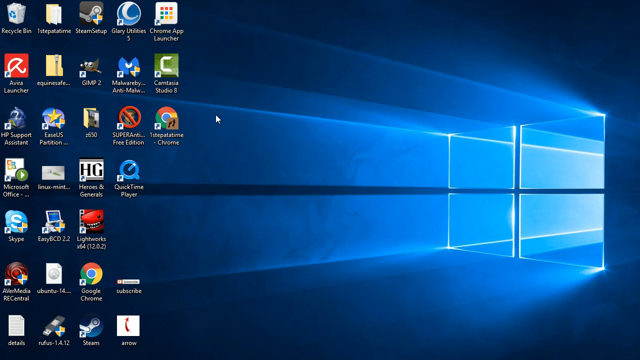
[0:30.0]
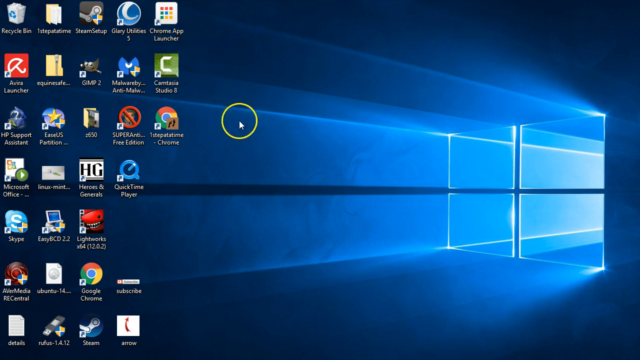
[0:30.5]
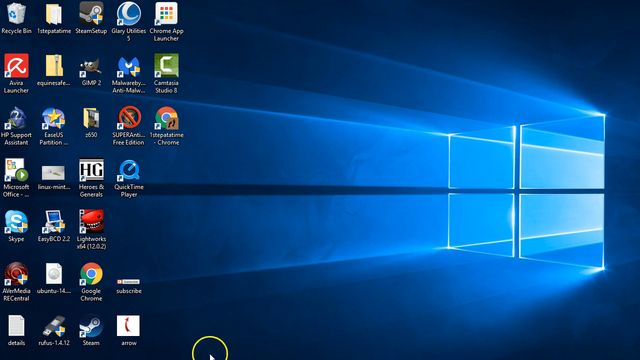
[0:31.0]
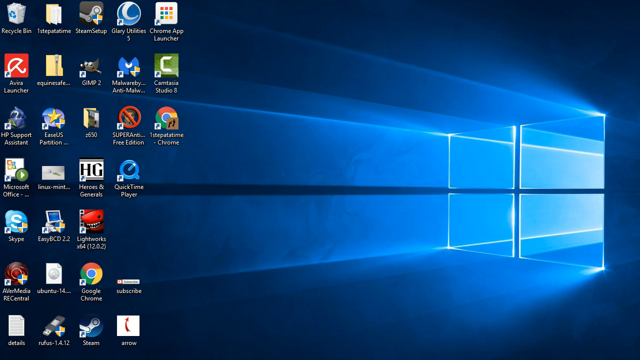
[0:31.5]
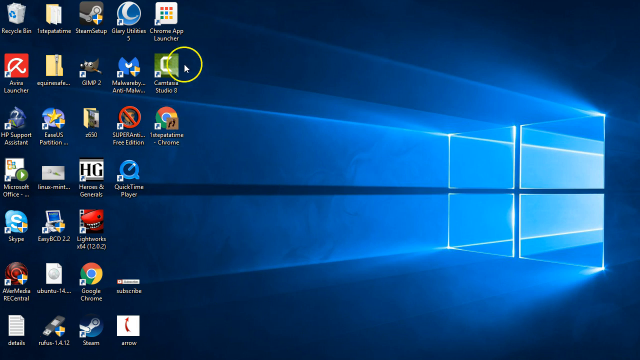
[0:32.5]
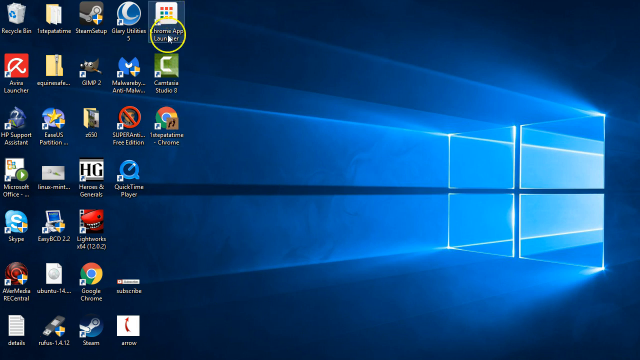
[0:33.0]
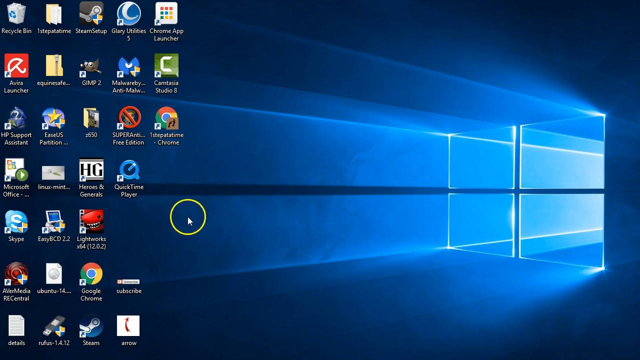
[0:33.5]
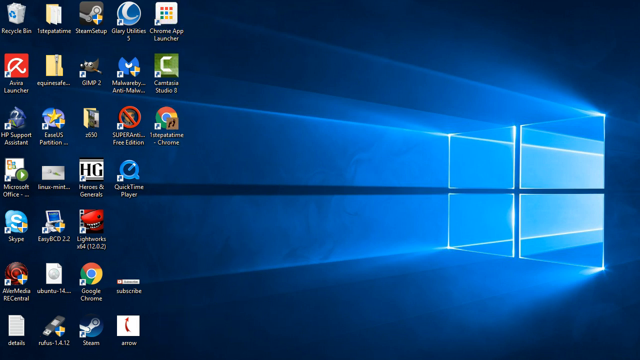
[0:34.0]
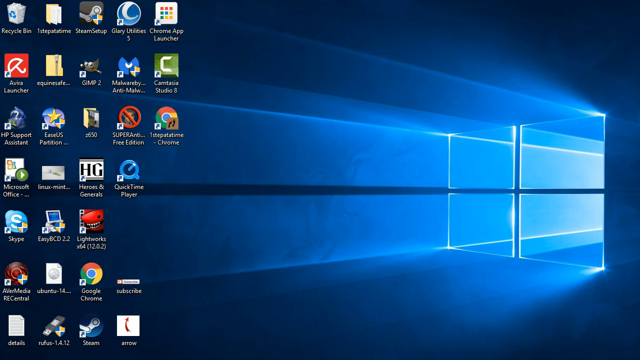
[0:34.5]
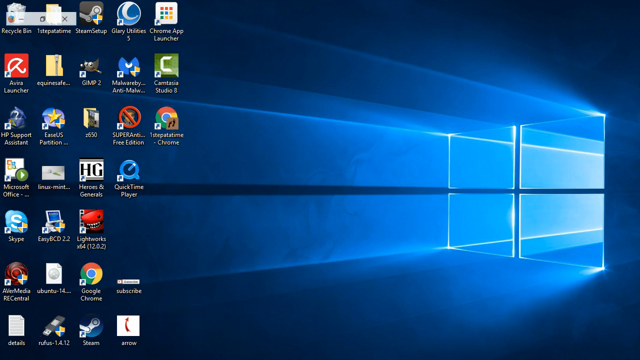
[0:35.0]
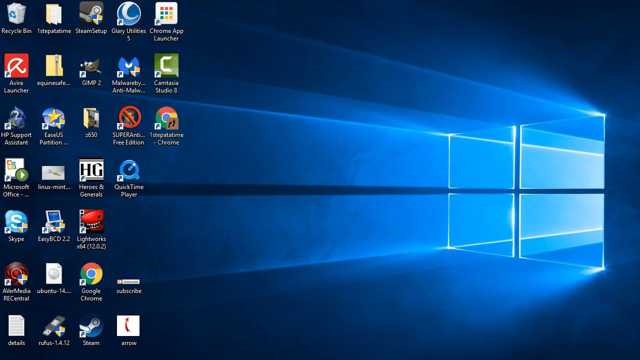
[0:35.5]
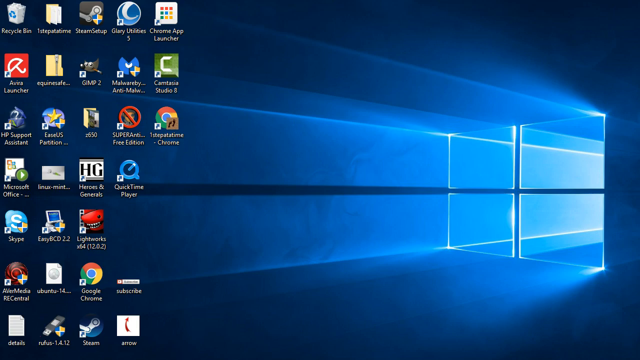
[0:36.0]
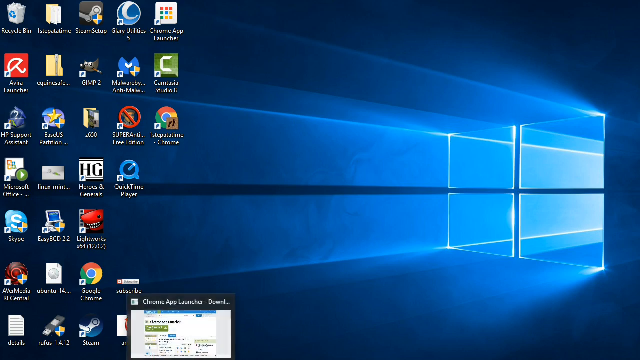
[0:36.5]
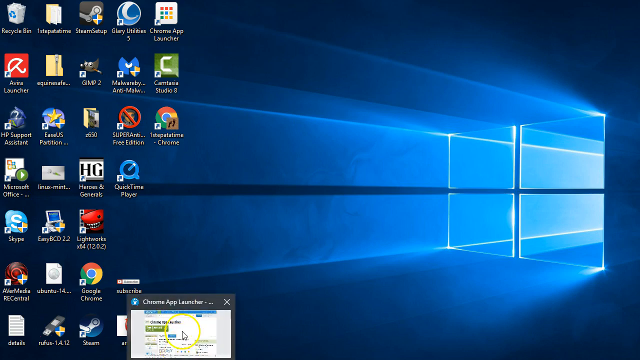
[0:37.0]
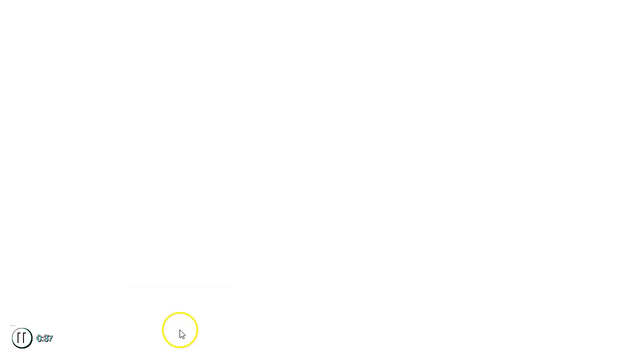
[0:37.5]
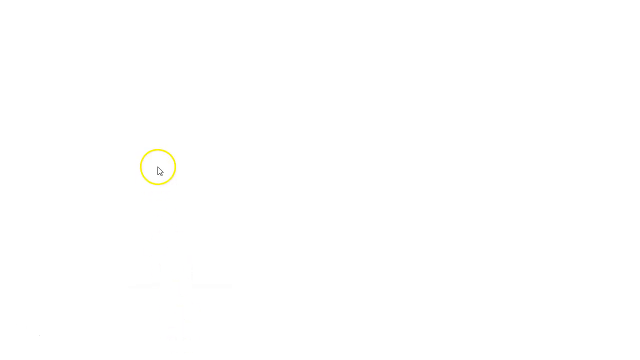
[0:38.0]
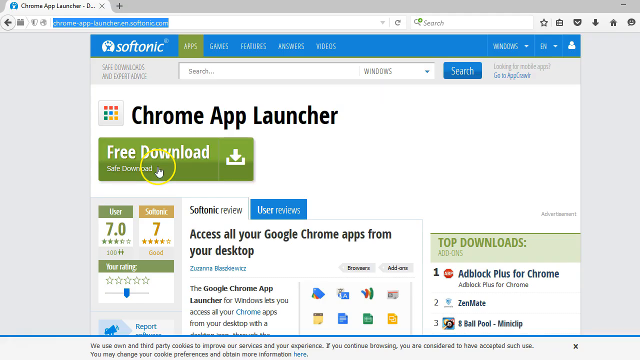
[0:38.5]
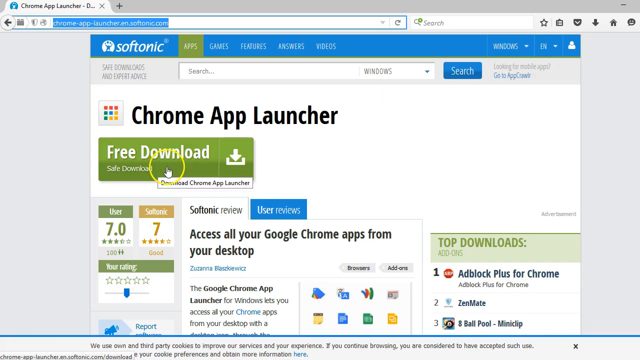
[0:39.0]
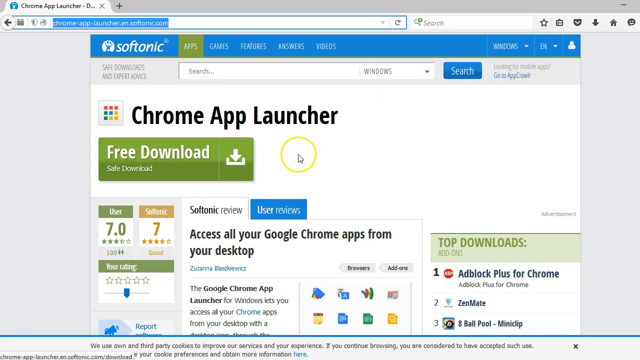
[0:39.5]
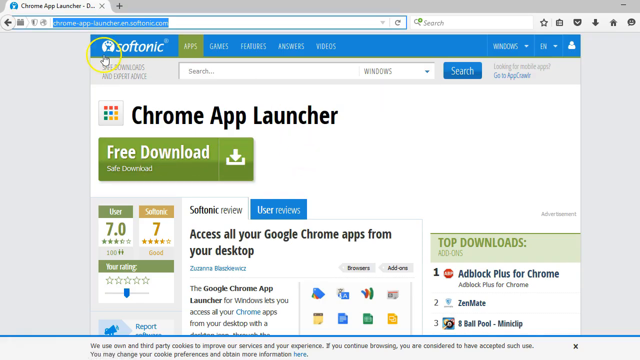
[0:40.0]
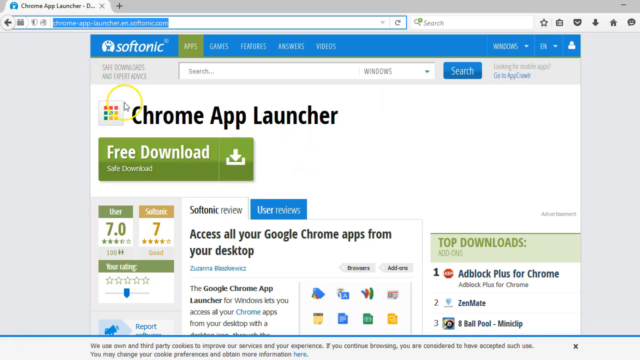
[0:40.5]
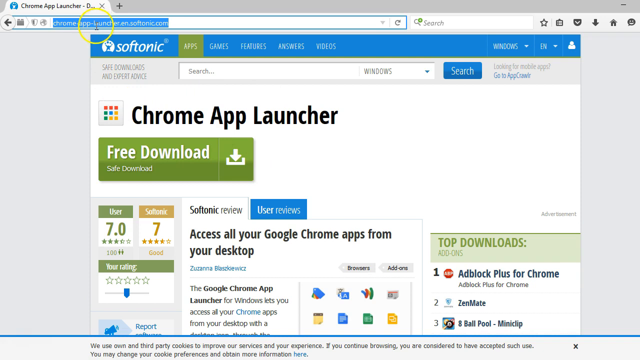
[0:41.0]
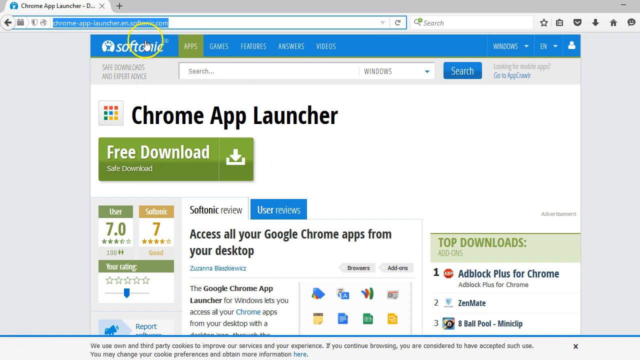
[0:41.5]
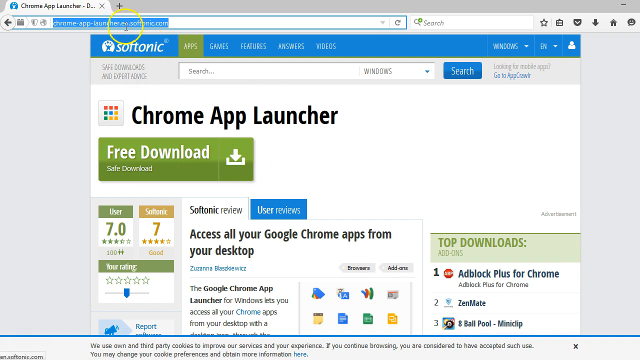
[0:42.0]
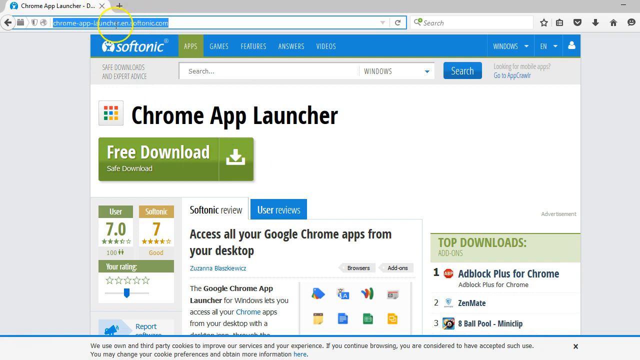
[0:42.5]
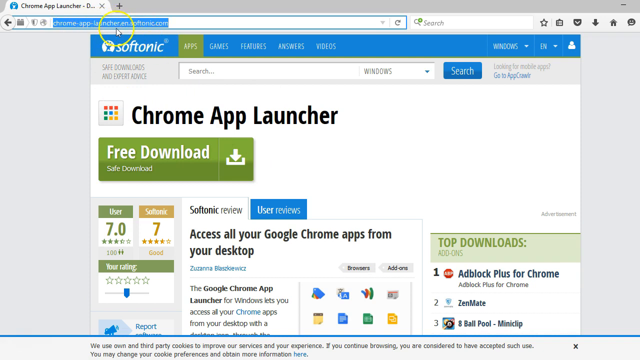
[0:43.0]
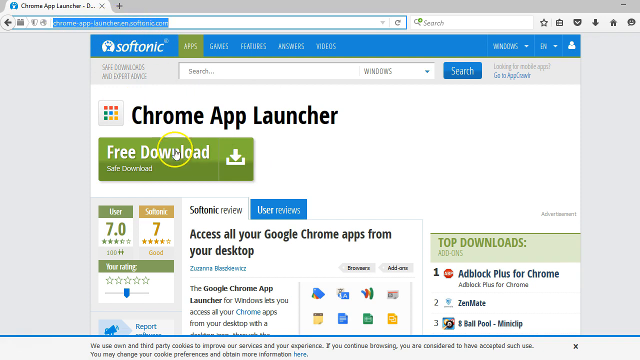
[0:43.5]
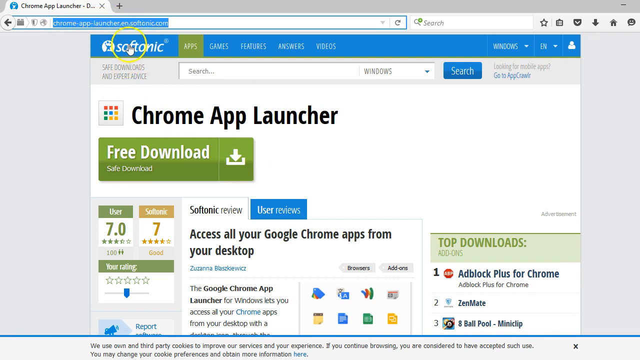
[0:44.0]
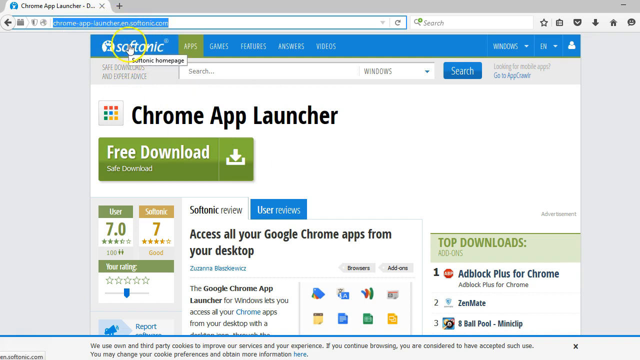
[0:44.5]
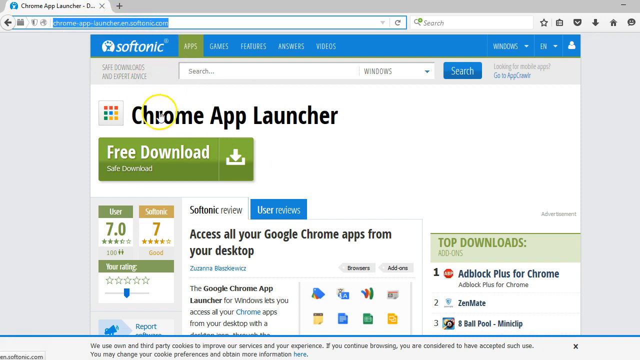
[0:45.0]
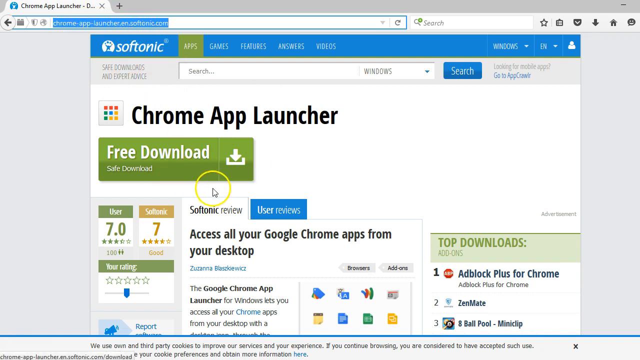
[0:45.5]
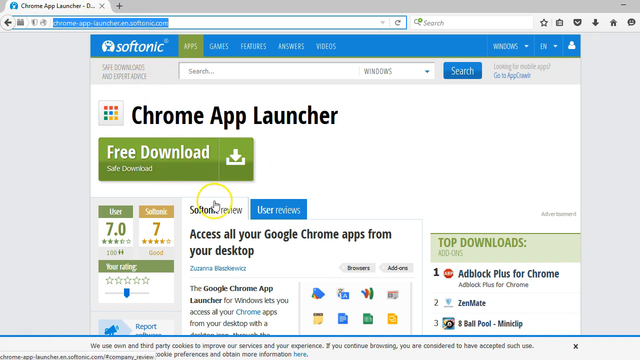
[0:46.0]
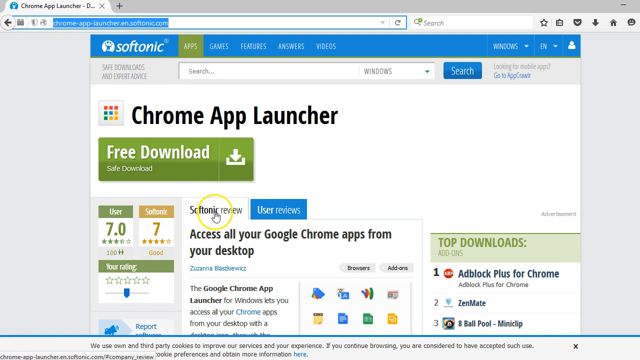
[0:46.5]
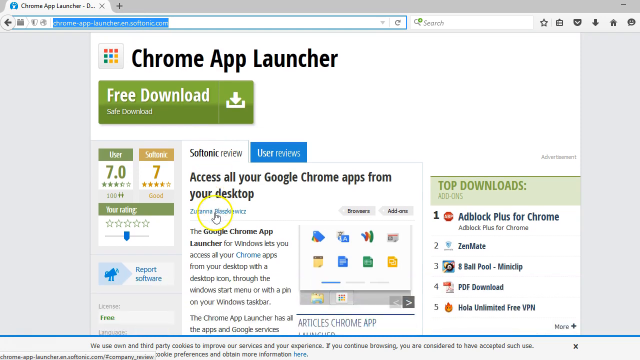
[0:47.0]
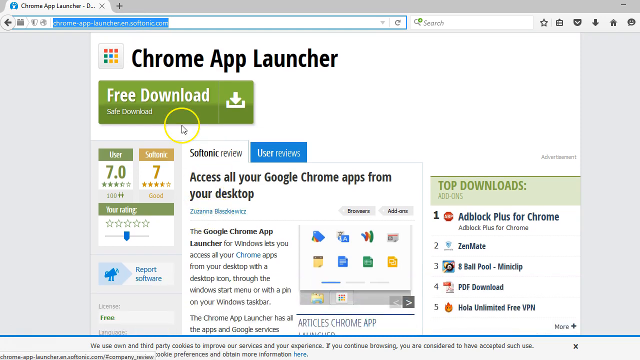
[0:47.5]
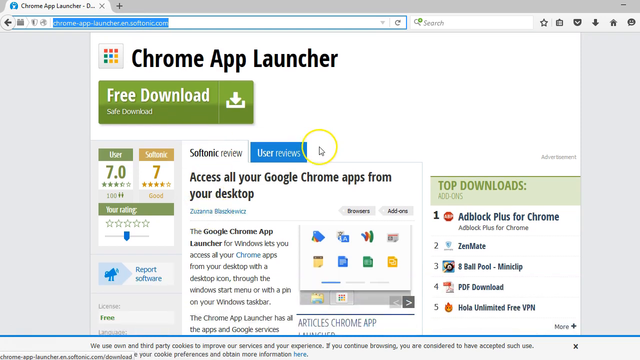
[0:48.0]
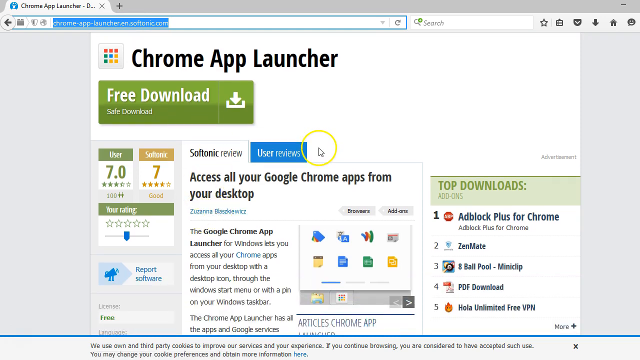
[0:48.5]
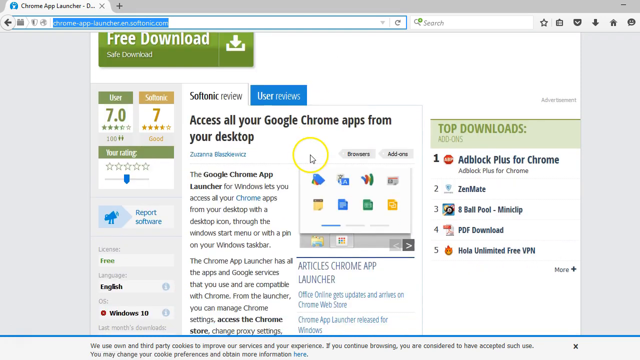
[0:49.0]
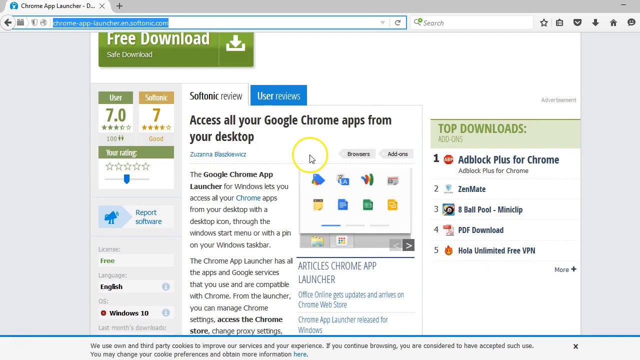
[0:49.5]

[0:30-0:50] A Windows desktop with a blue background is shown. A four-pane window on the left-hand side of the screen is part of the background, and it appears as though light is shining in from it, creating lines of lighter color toward the left-hand side of the screen. Five columns and seven rows of icons are on the left-hand side. A white arrow cursor is positioned to the right of the icons in the center of the screen; when it moves, a white circle about the size of one of the icons forms around it. The cursor moves off the screen toward the bottom, then back up to highlight the icon in the fifth column of the first row, circles on it, and moves down to the bottom again. A square preview of a window pops up at the bottom of the screen; it is clicked and maximizes to fill the entire screen. The window is a page from Softronics titled "Chrome App Launcher", with a white background and a vertical navigation bar with a blue background and white writing. Beneath the title is a large green rectangle with white writing reading "free download". The cursor passes over the web address and then the company logo on the navigation bar. The screen then scrolls down until the navigation bar is no longer visible, and the cursor highlights the story title beneath the download button: "Access All Your Google Chrome Apps From Your Desktop".